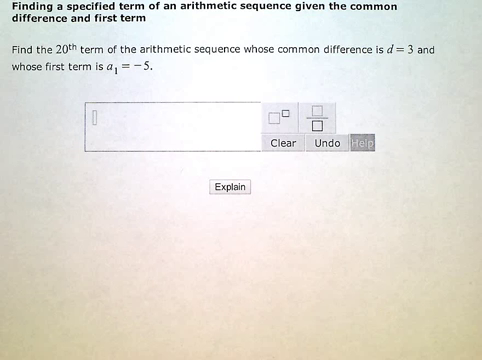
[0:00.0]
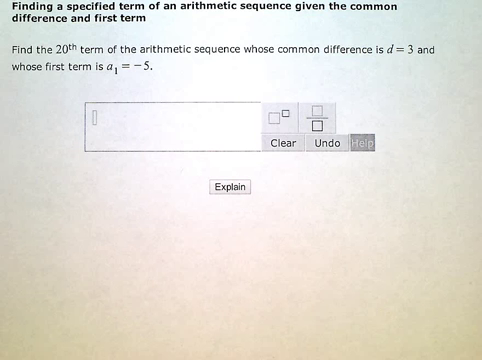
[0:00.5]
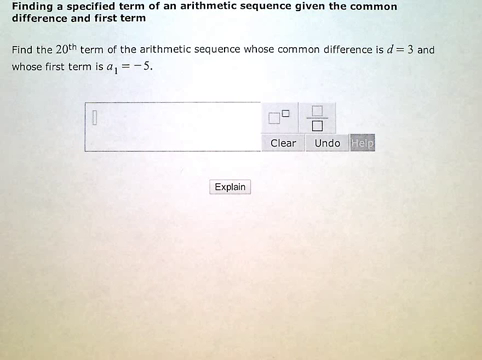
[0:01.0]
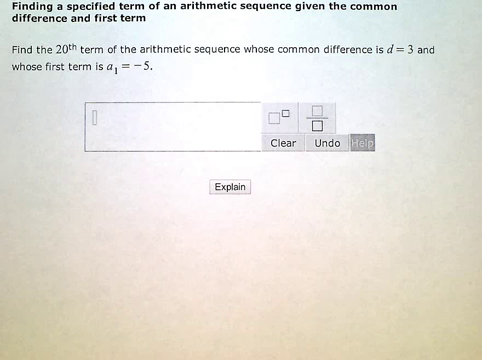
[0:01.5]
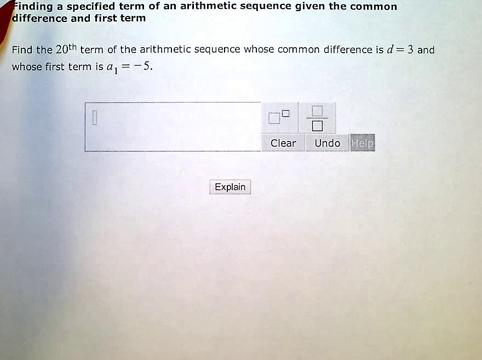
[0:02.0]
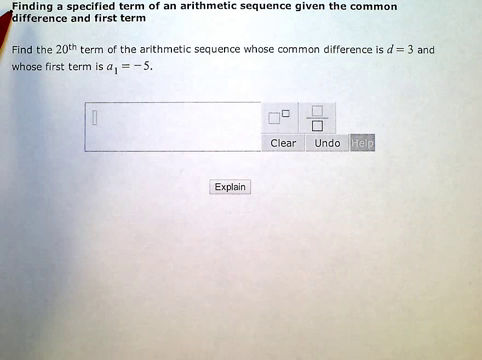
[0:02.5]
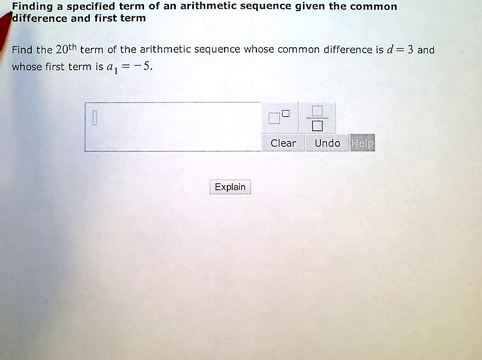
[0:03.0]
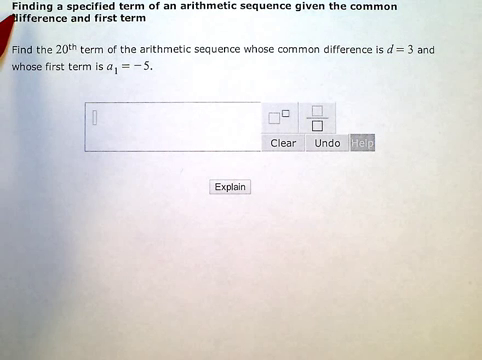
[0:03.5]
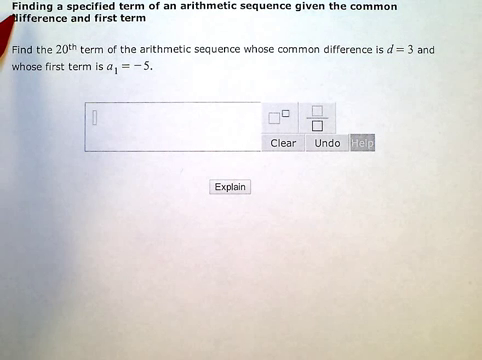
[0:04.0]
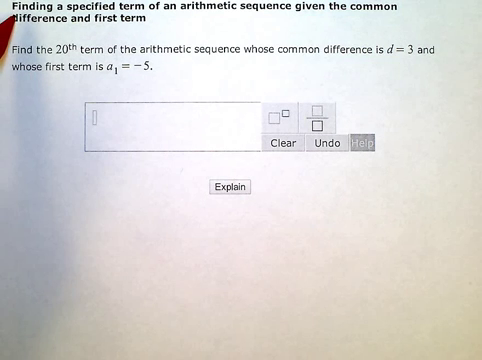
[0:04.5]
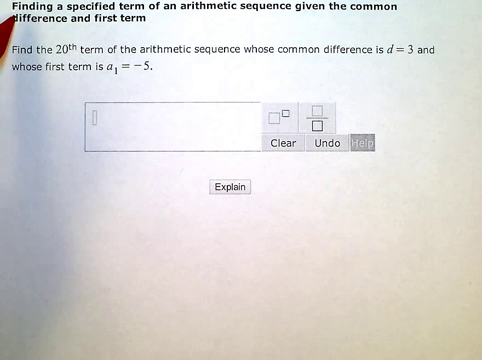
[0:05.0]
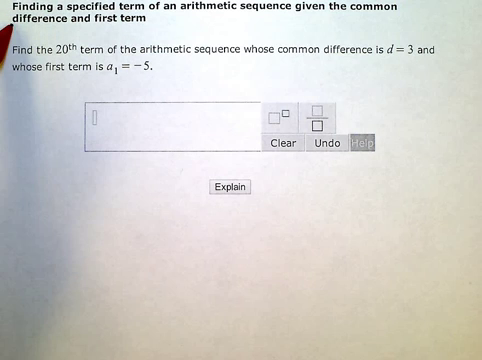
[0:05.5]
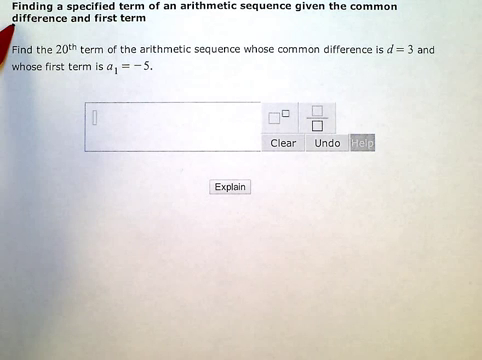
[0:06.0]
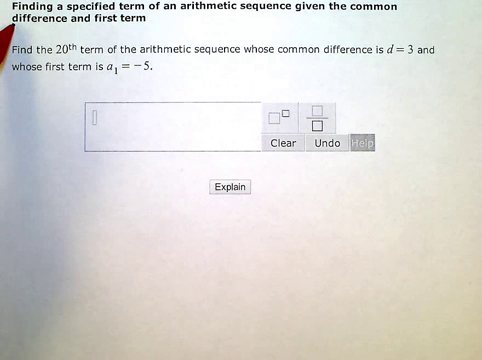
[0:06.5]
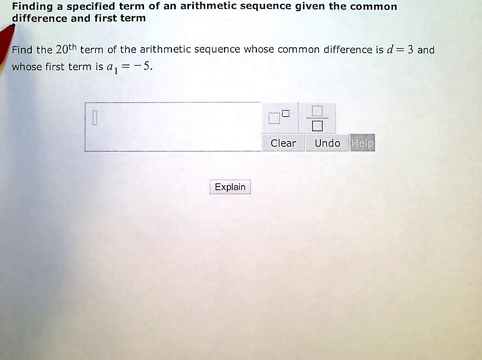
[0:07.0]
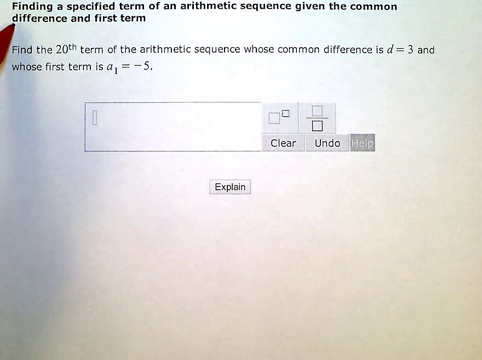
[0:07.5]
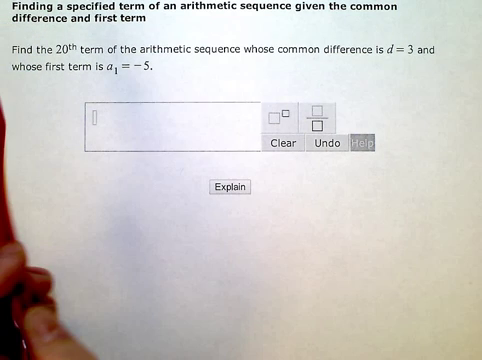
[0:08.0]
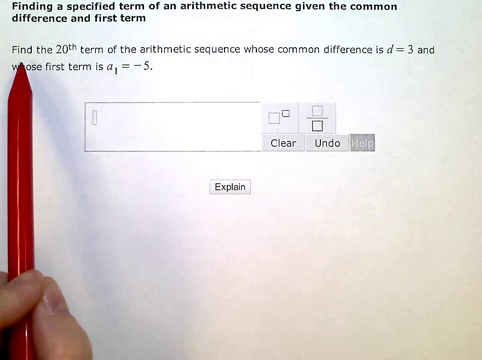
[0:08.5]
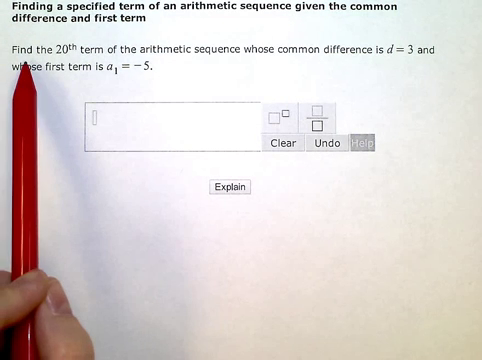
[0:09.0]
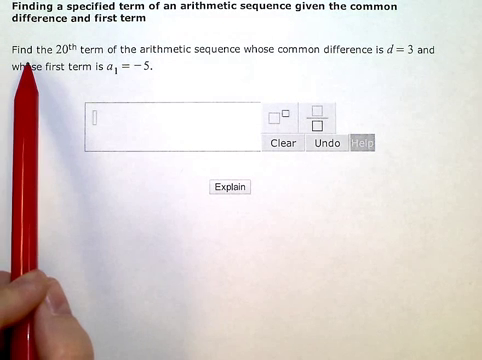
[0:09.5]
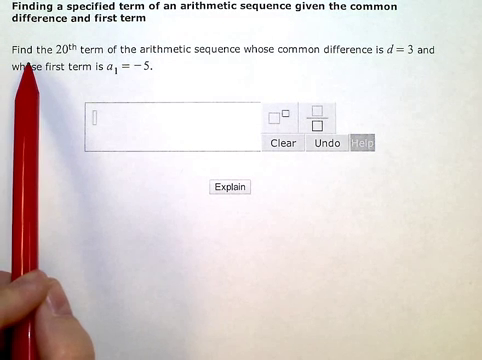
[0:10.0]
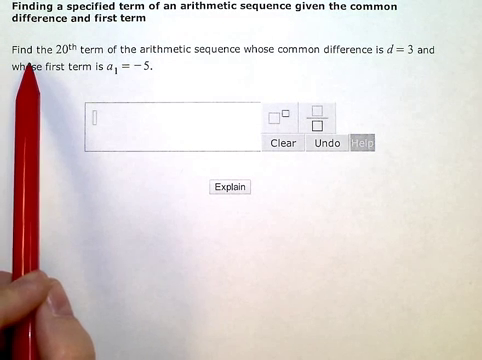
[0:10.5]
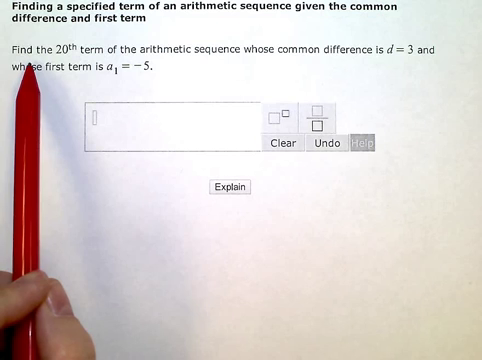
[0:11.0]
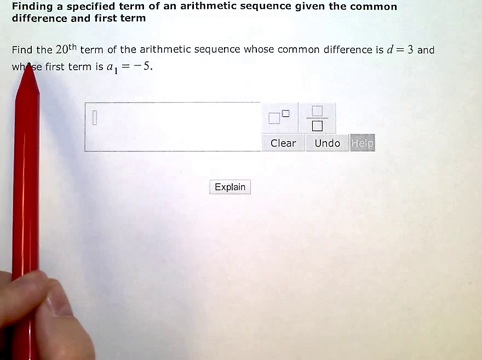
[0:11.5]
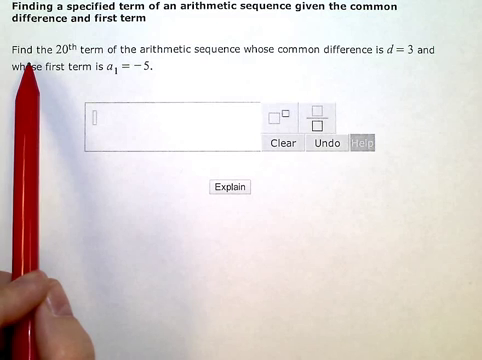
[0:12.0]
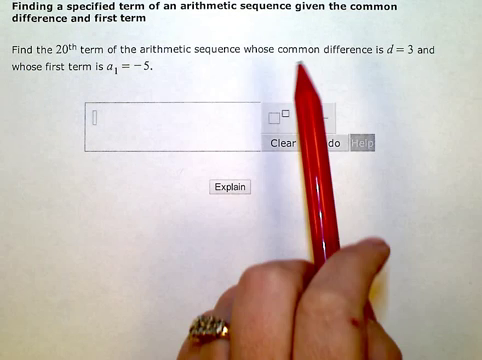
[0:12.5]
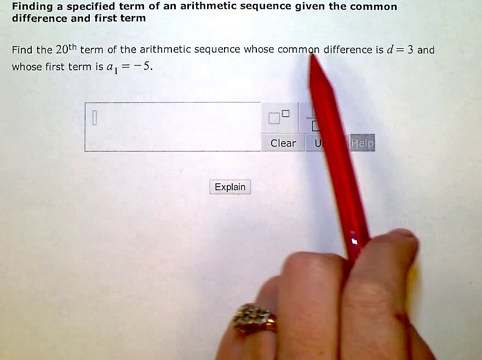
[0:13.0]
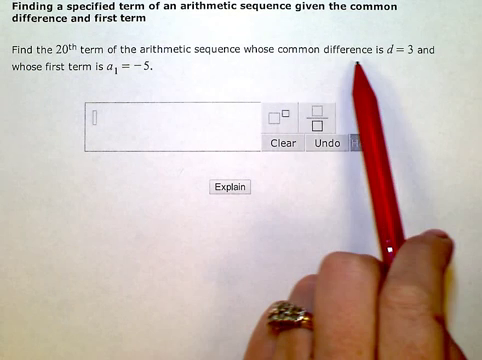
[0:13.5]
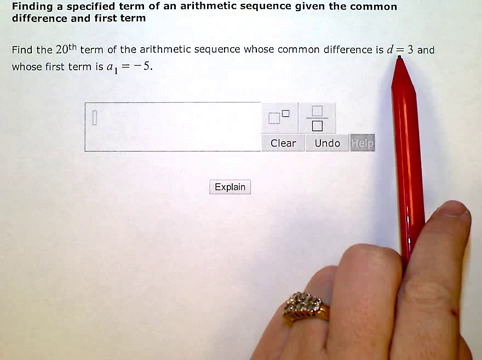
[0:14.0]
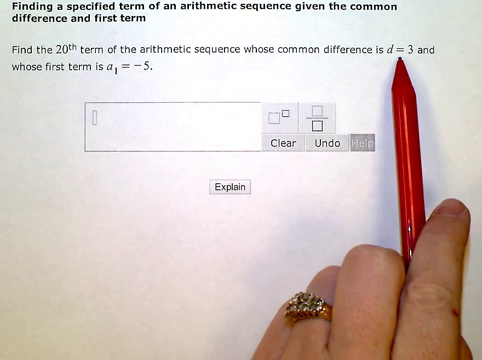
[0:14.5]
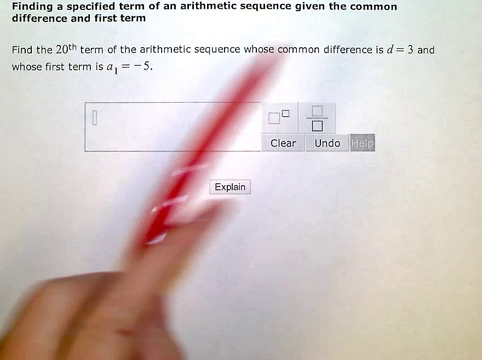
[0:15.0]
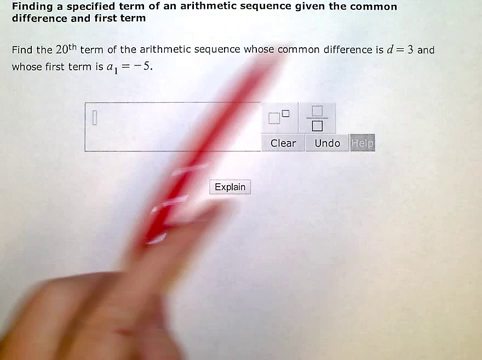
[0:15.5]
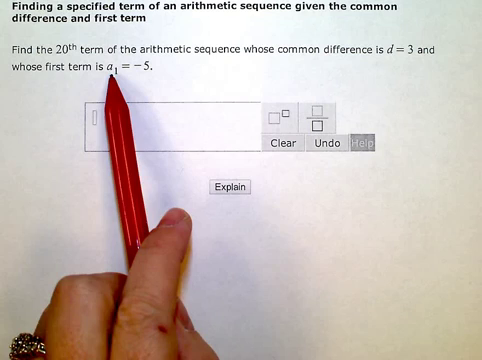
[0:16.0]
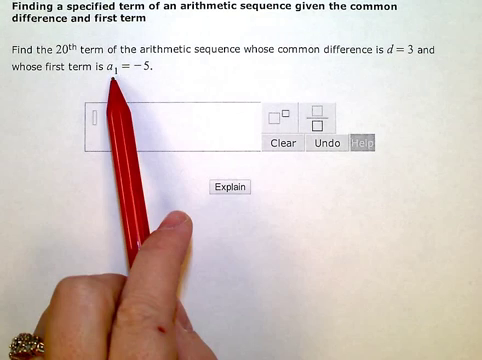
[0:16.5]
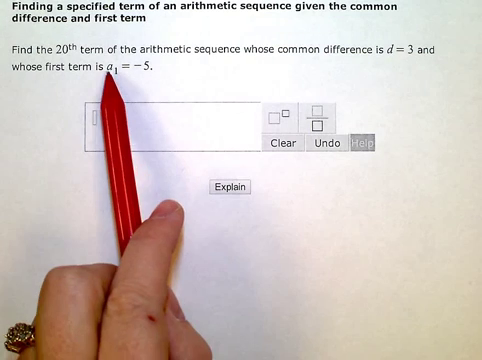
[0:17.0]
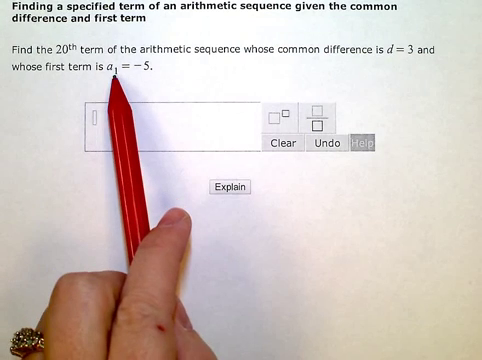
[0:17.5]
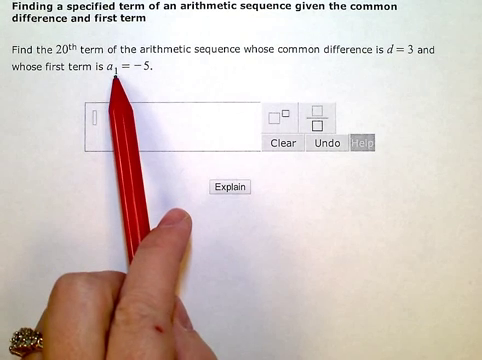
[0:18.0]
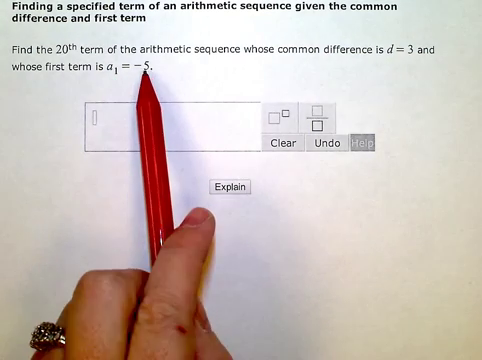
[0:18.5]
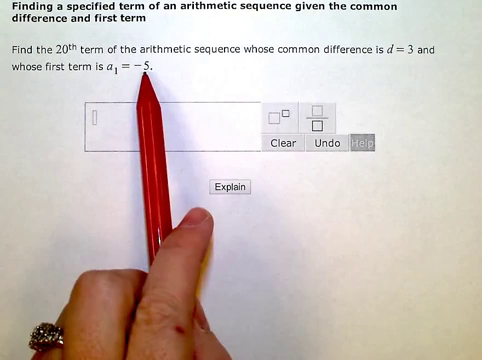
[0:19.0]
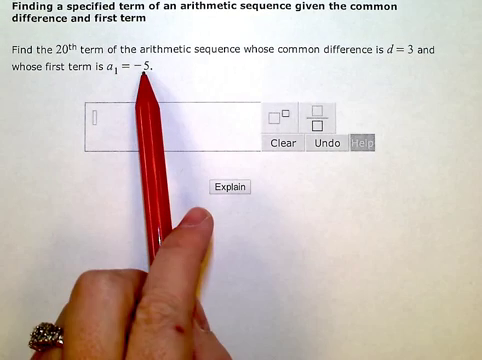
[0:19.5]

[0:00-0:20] The on-screen heading reads "Finding a specified term of an arithmetic sequence given the common difference and first term," followed by the question "Finding the 20th term of the arithmetic sequence whose common difference is d = 3 and whose first term is a1 = -5." Someone holding a pencil rereads the question on the paper, going over it again with the pencil. Her hand moves back and forth over the question. A box on the page offers the options "clear" and "undo"; there is an empty box, an option labeled "help", and a box for "explain".